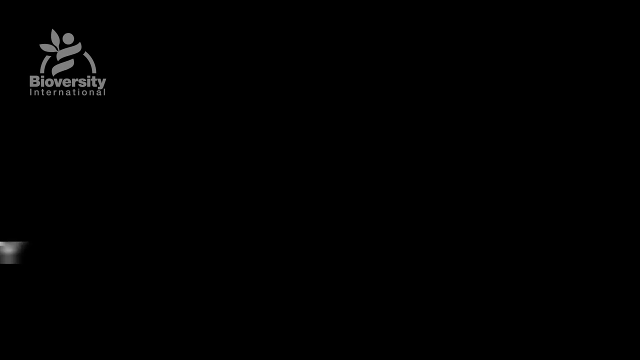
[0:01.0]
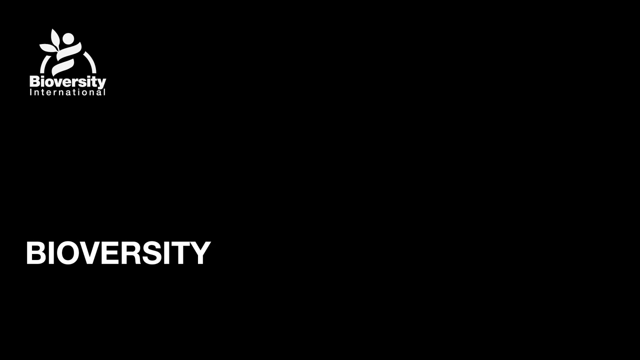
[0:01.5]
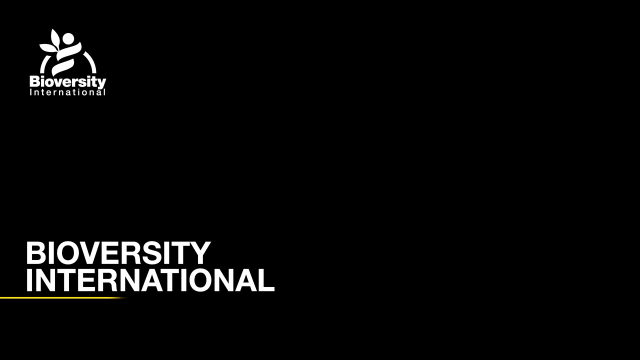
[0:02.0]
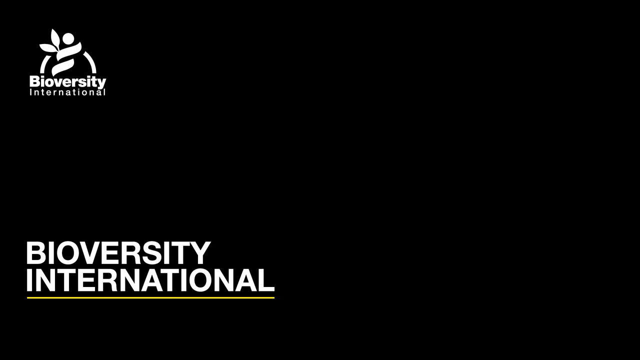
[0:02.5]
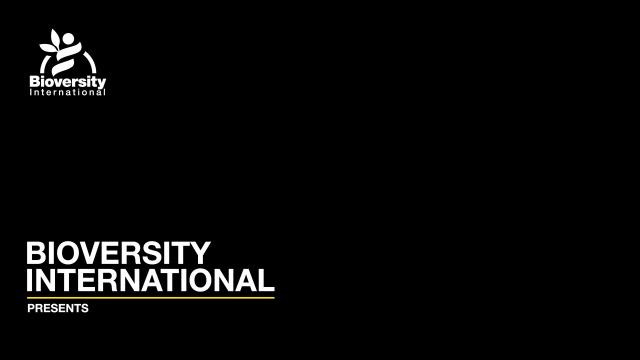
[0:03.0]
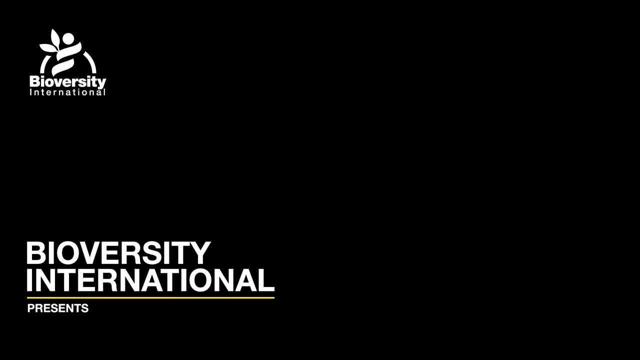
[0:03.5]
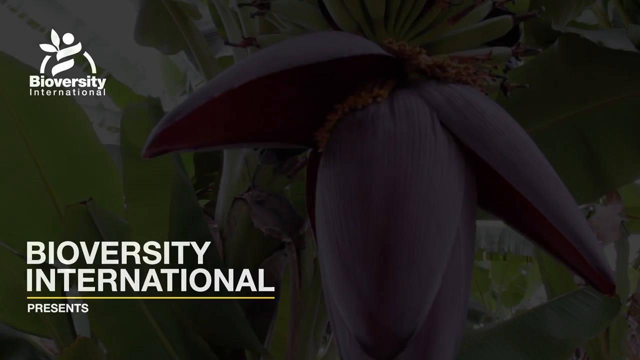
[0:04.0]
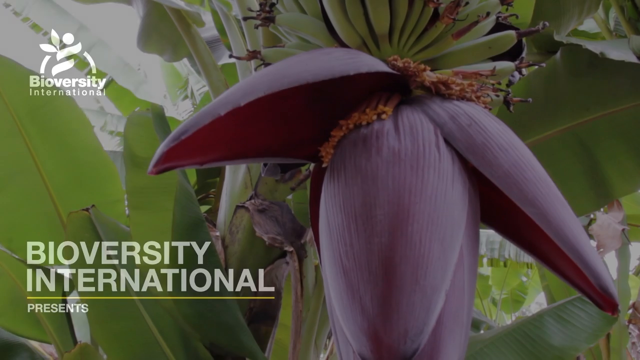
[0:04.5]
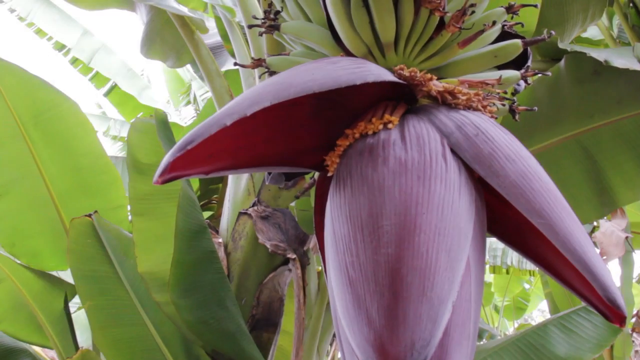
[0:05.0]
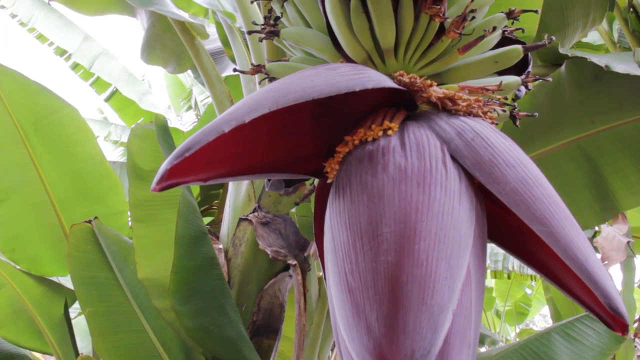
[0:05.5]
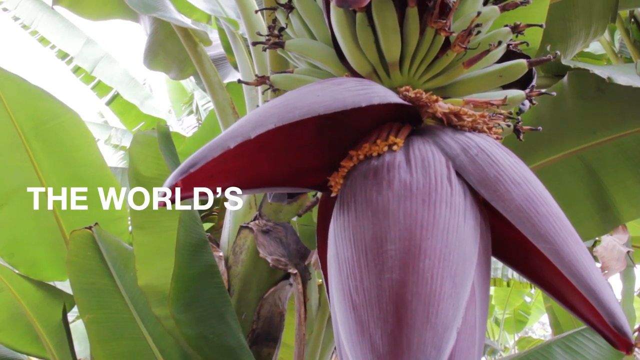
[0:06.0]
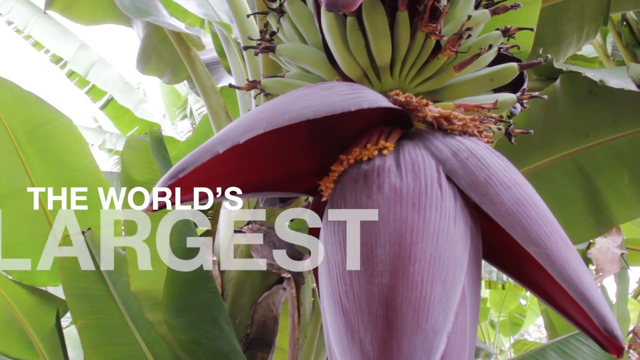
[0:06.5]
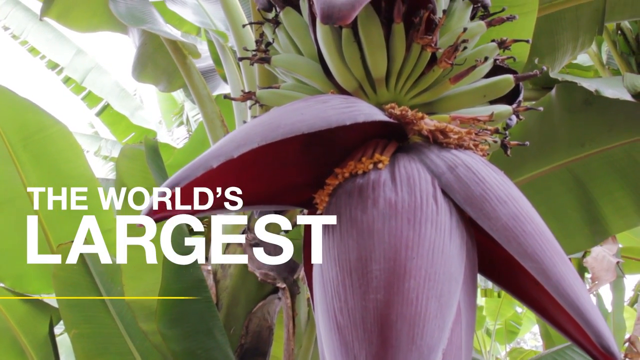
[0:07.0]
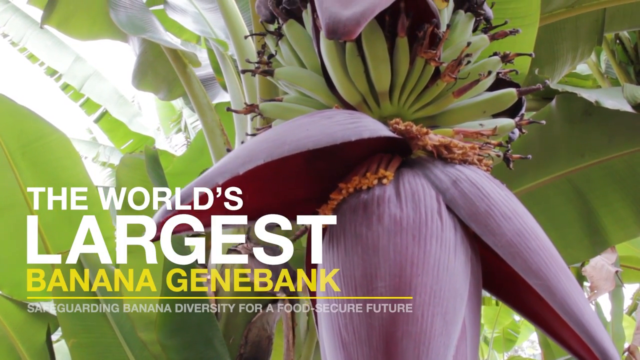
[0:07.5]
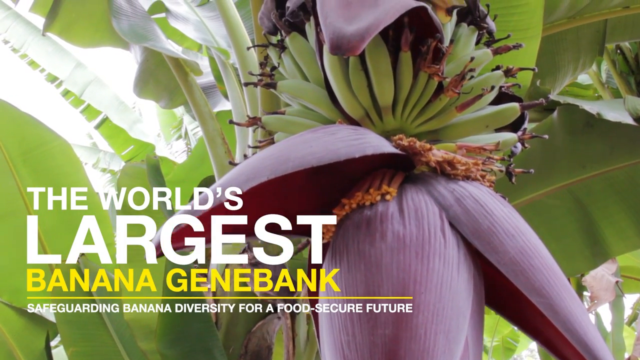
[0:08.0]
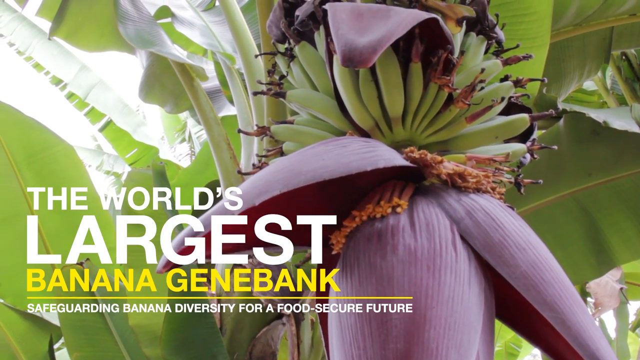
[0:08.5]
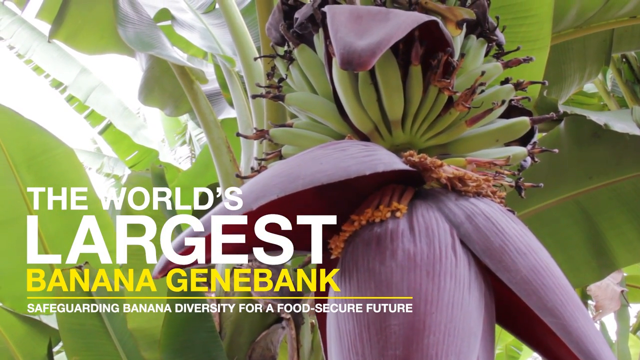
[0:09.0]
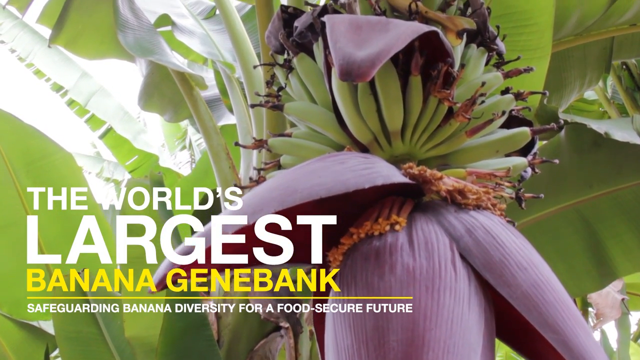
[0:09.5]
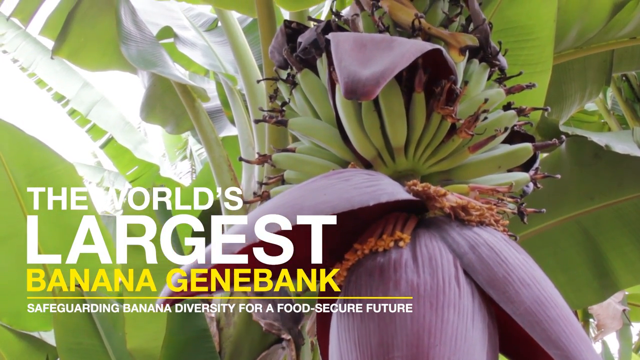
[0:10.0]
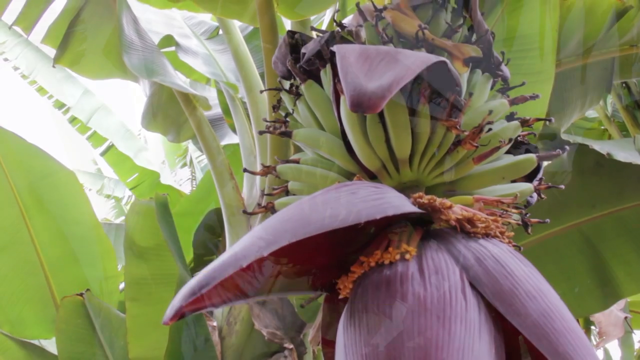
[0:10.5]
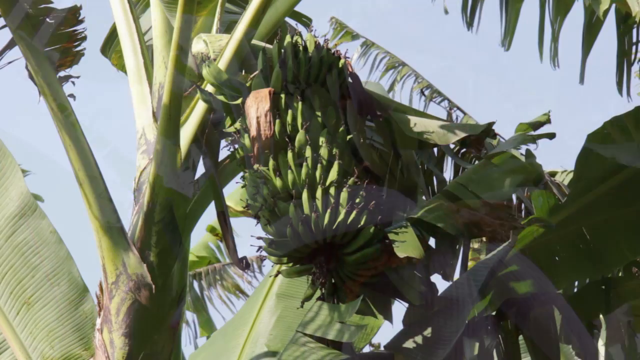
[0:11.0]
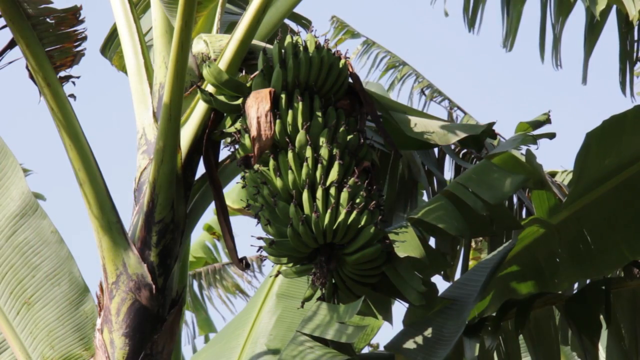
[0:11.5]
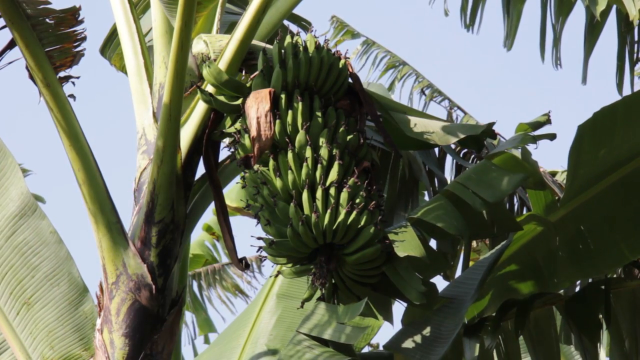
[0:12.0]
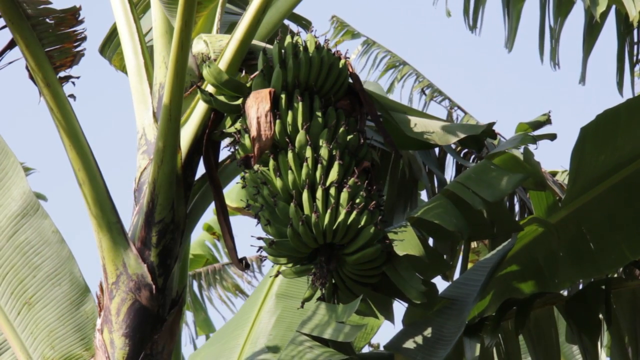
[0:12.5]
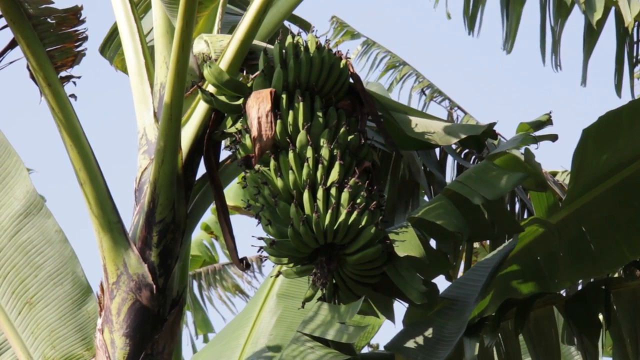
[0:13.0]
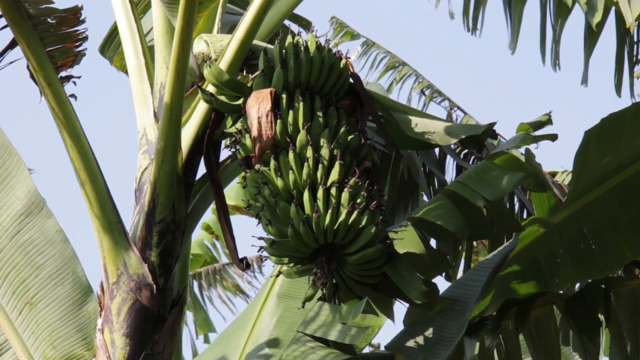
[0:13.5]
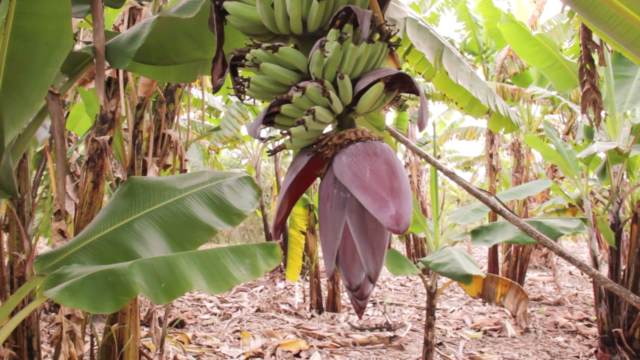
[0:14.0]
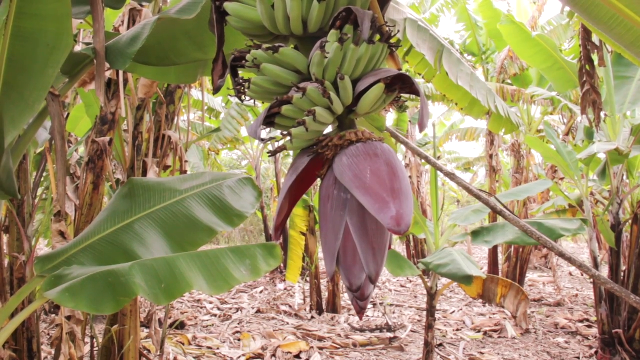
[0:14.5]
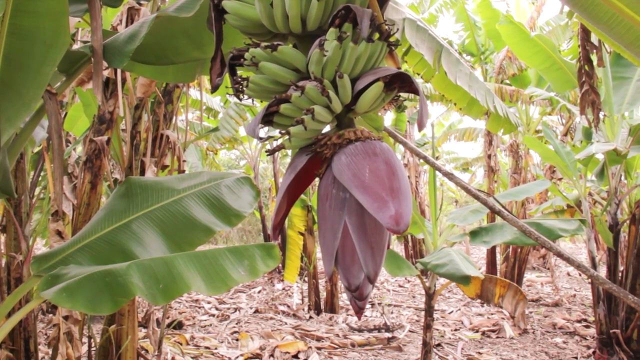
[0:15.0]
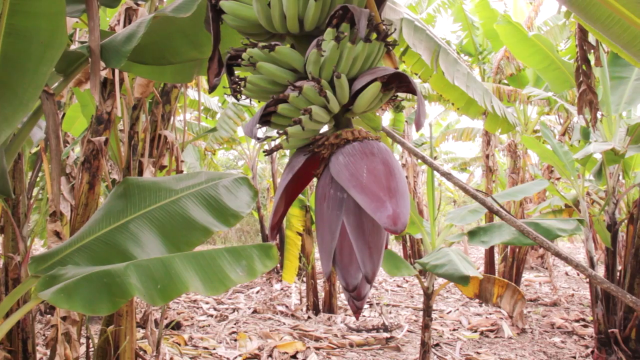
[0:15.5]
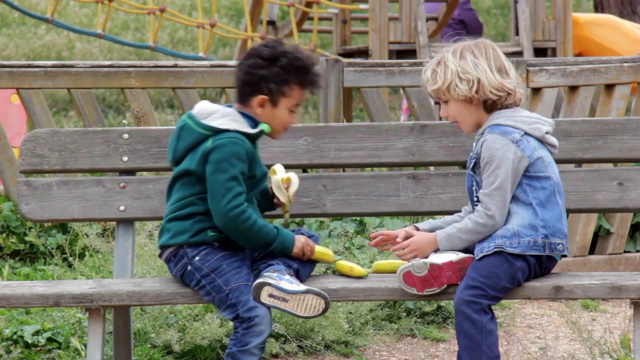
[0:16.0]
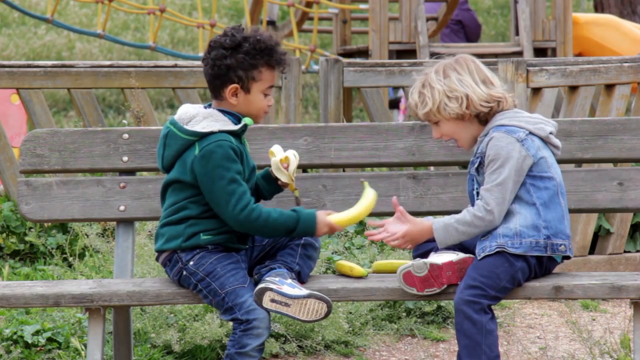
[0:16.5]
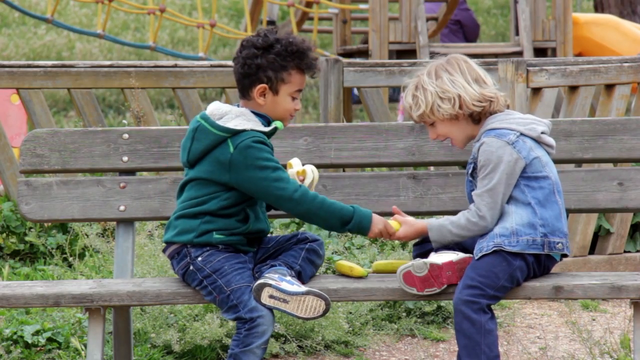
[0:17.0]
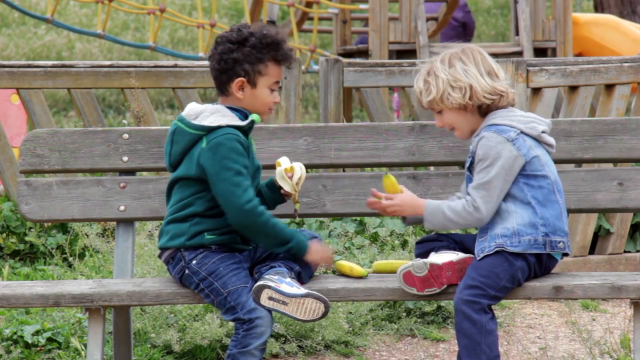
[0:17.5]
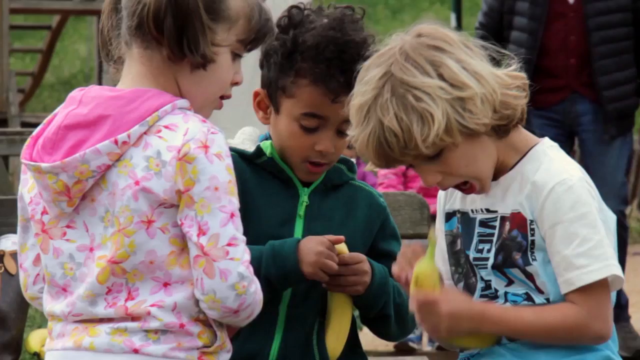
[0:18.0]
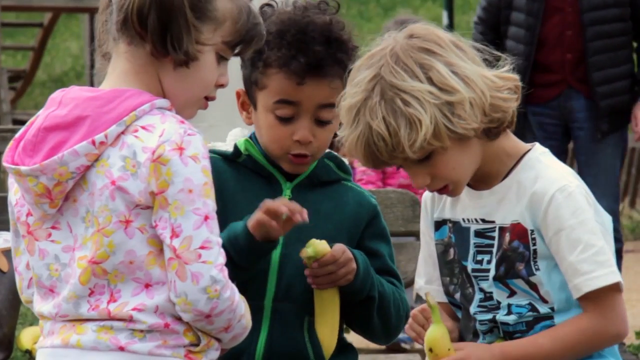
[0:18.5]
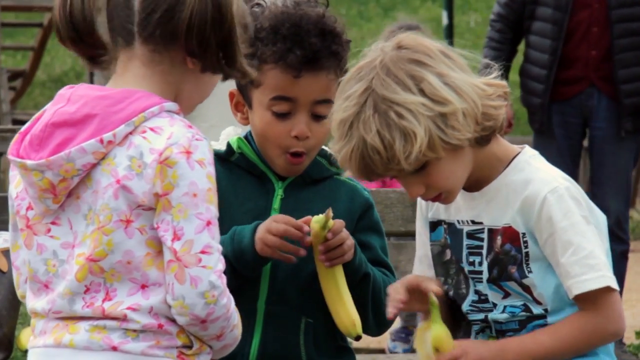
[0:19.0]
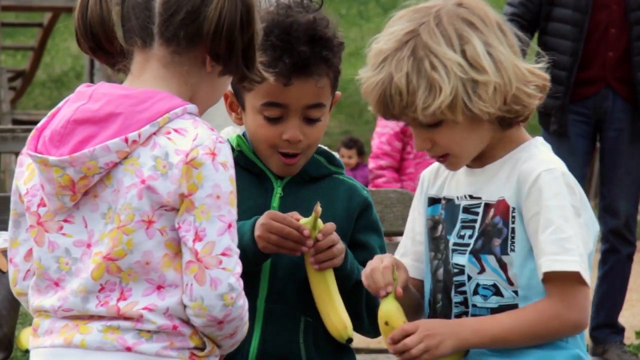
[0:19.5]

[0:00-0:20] The video opens on a black screen, then the headline "the world's largest banana gene bank" appears. A banana plant is shown with large purple leaves surrounding it and bananas in bunches. The view zooms out a little to show a larger plant, presumably holding more bananas, with lots of green leaves and lots of things surrounding the bananas and plant. Another shot focuses on the bananas closer to the ground, where large purple leaves are also visible. Next, two little boys sit on a bench, roughly facing each other: one wears a green sweatshirt and looks to be African American; the other is blonde, looks to be Caucasian, and wears a blue jean jacket. They appear to be eating and sharing bananas. The shot then zooms out to show the two children with a third child, a little girl with brown hair.